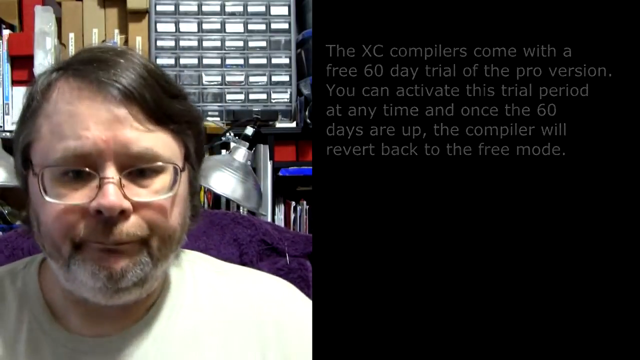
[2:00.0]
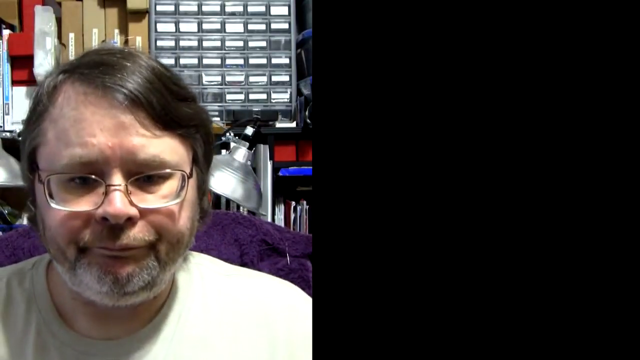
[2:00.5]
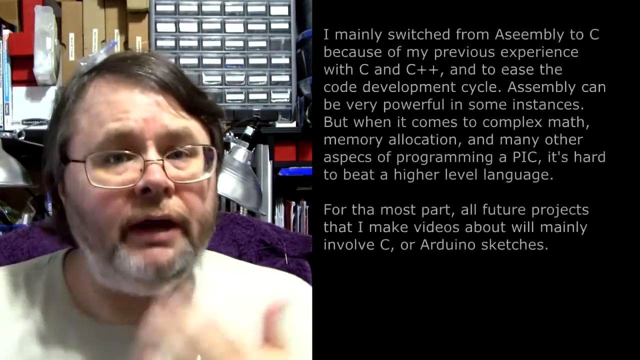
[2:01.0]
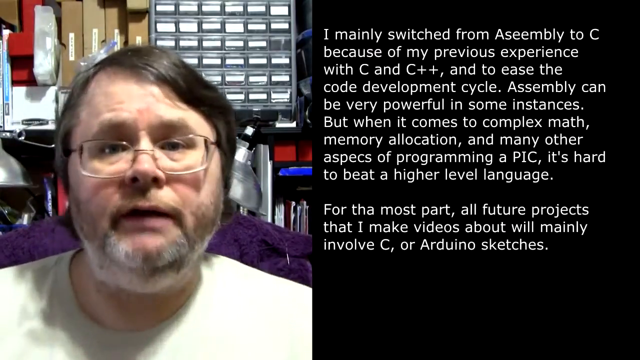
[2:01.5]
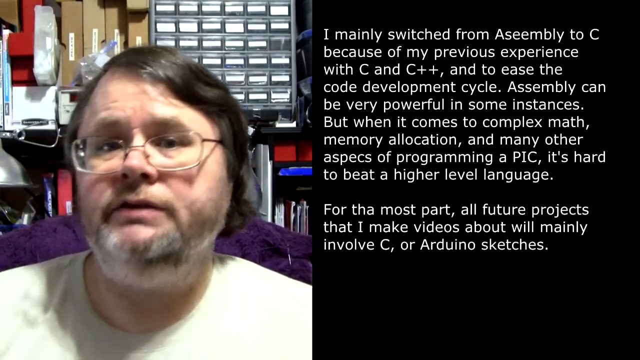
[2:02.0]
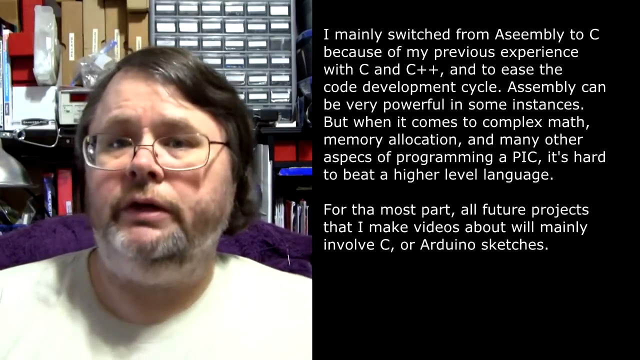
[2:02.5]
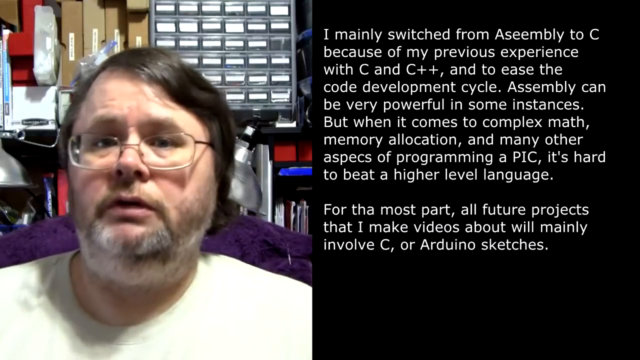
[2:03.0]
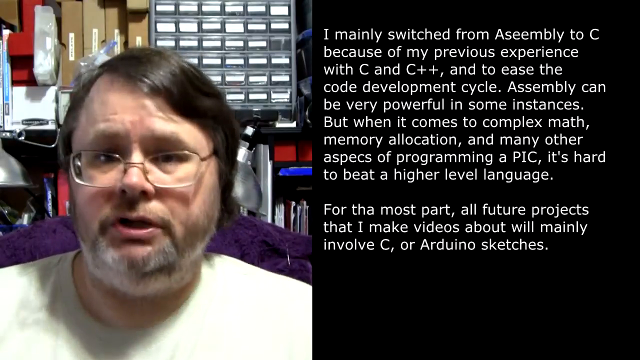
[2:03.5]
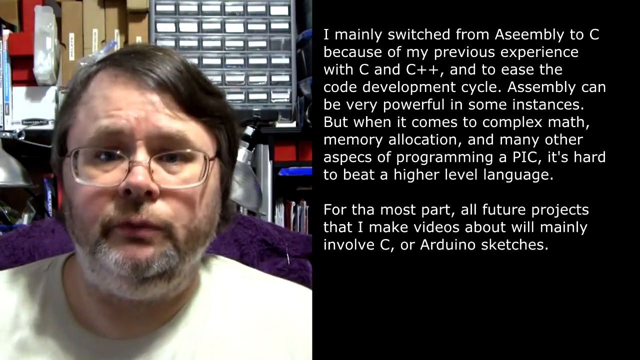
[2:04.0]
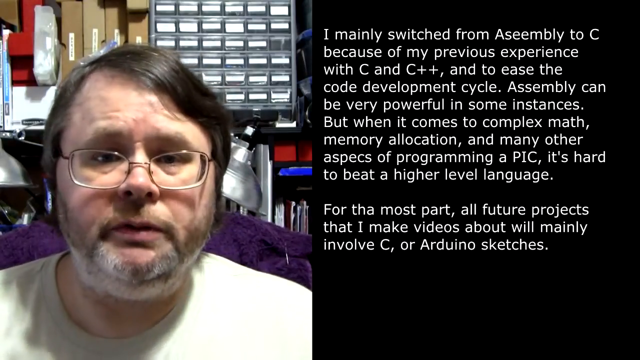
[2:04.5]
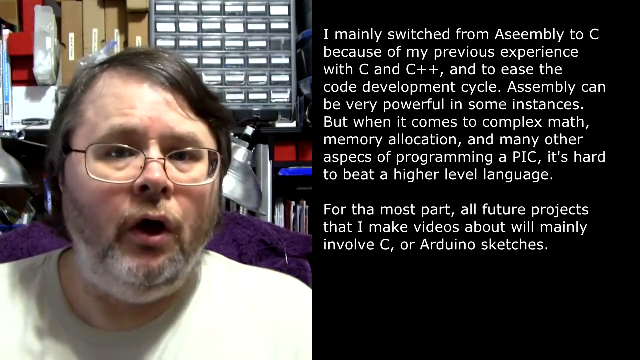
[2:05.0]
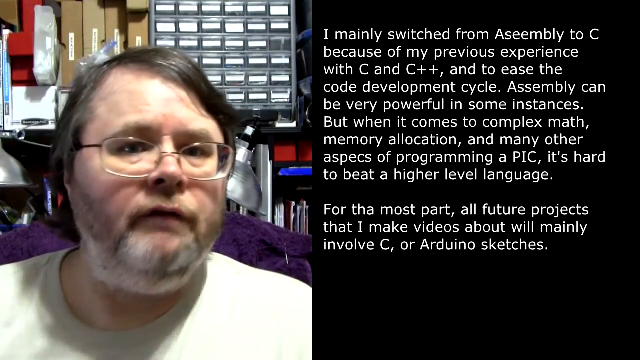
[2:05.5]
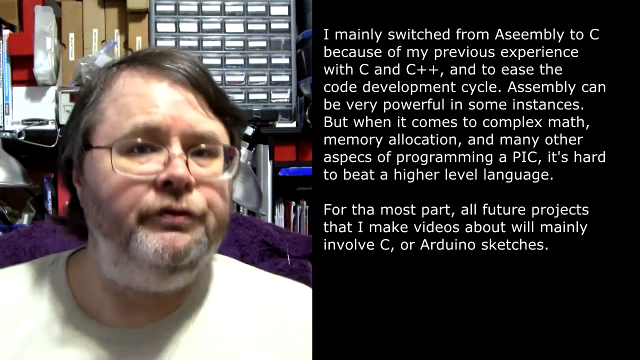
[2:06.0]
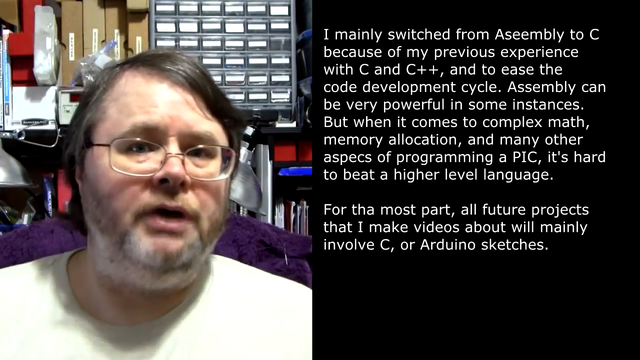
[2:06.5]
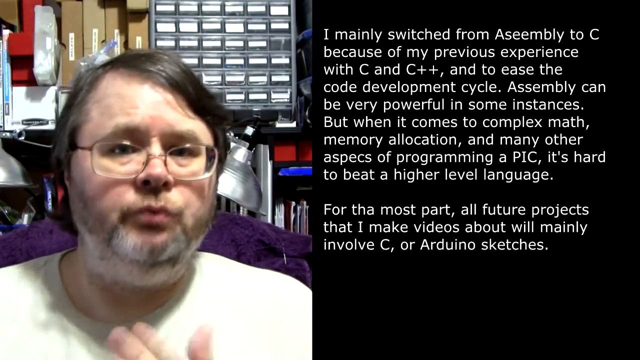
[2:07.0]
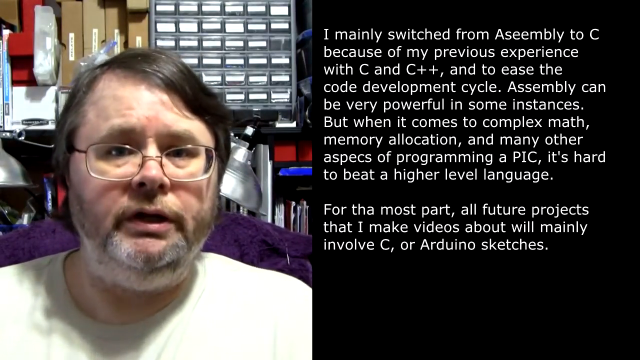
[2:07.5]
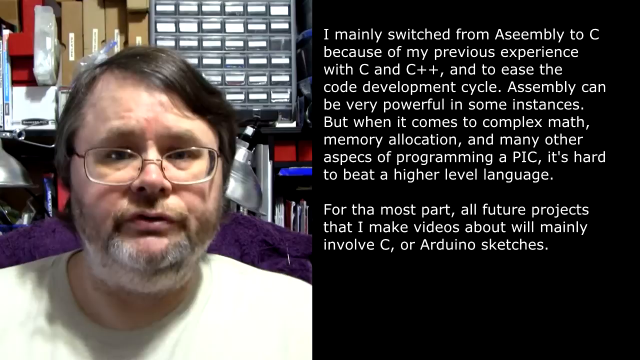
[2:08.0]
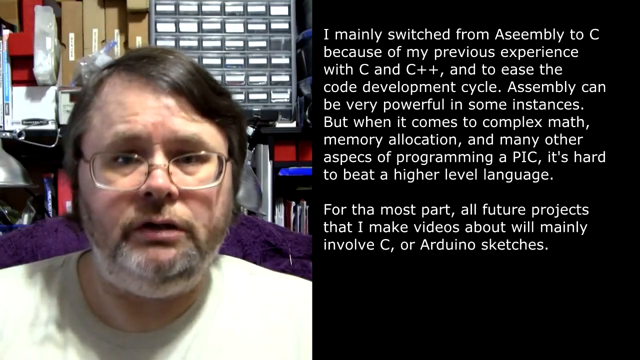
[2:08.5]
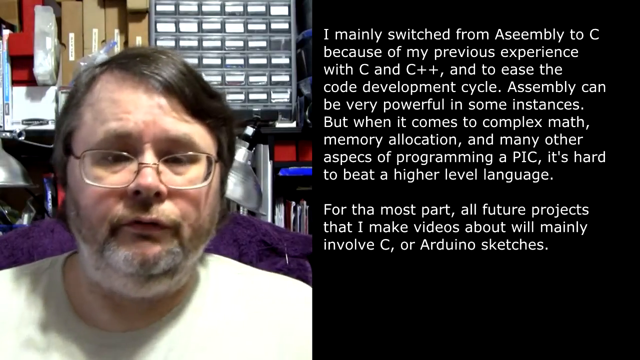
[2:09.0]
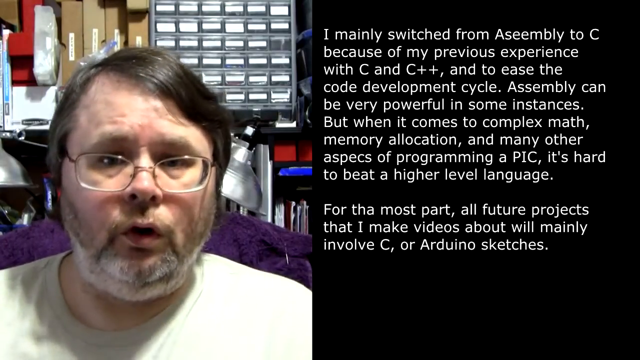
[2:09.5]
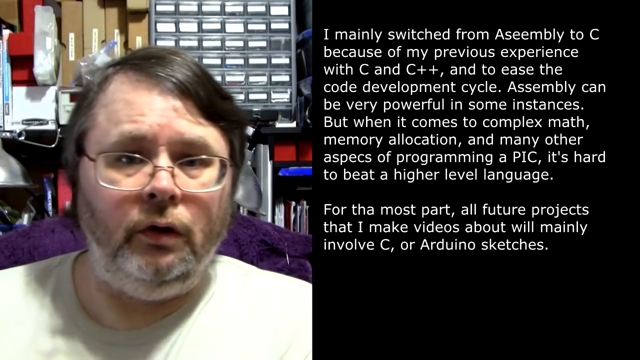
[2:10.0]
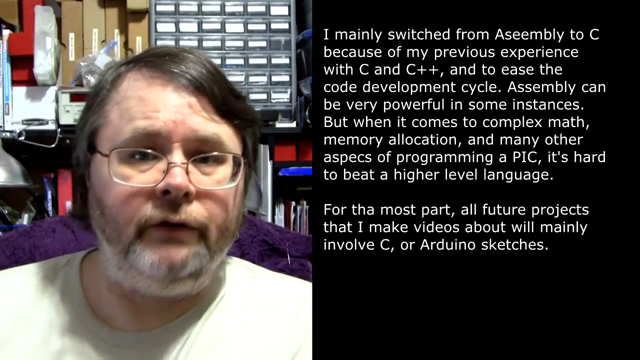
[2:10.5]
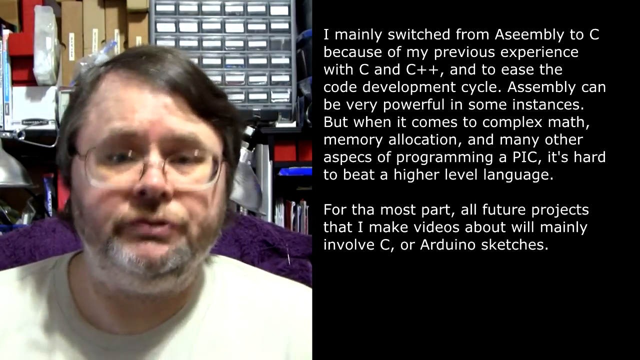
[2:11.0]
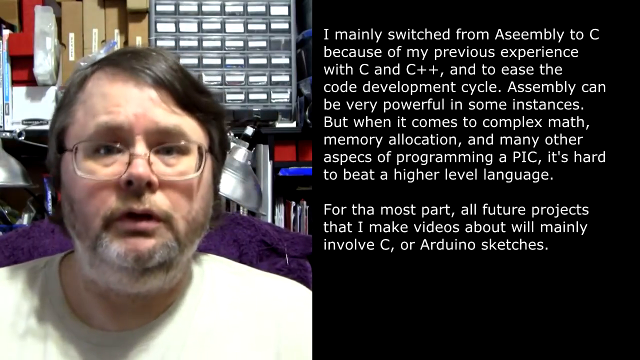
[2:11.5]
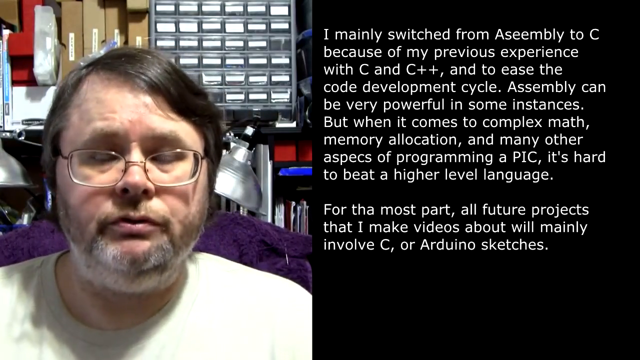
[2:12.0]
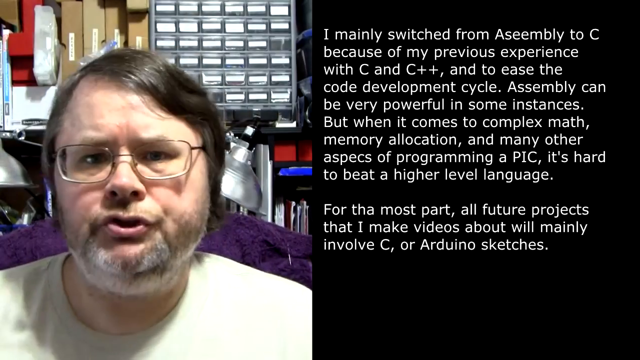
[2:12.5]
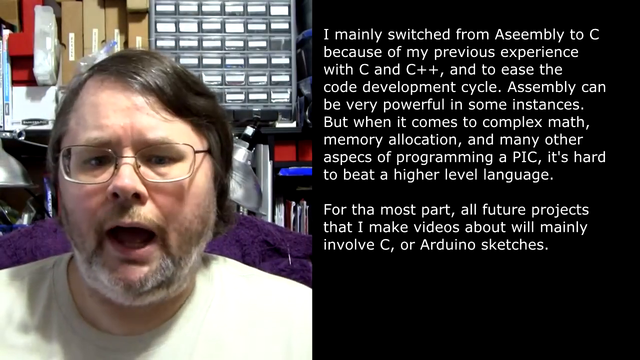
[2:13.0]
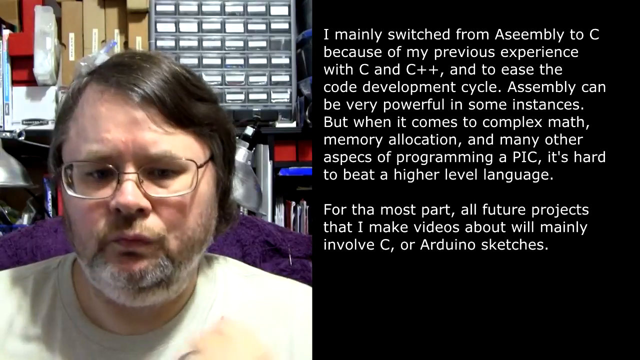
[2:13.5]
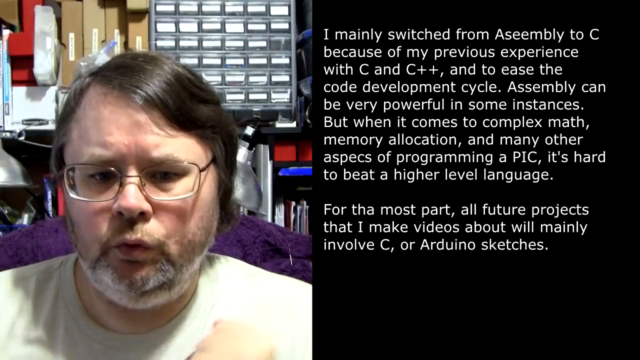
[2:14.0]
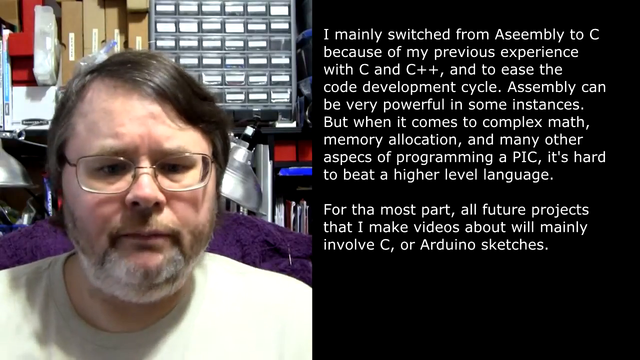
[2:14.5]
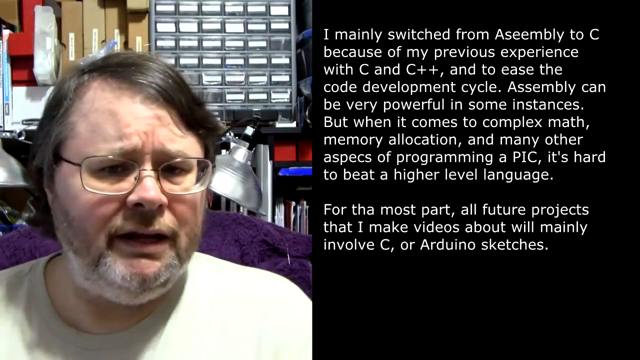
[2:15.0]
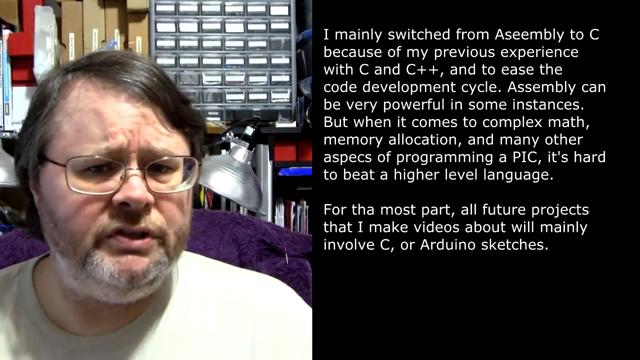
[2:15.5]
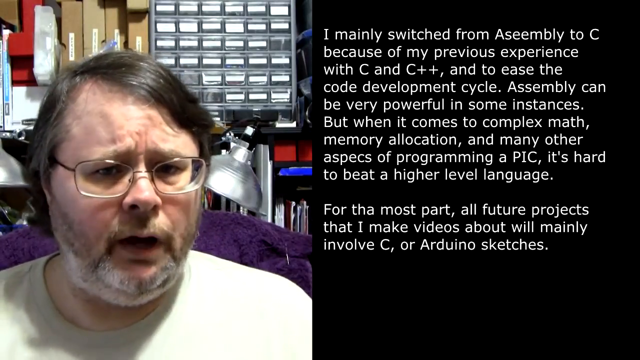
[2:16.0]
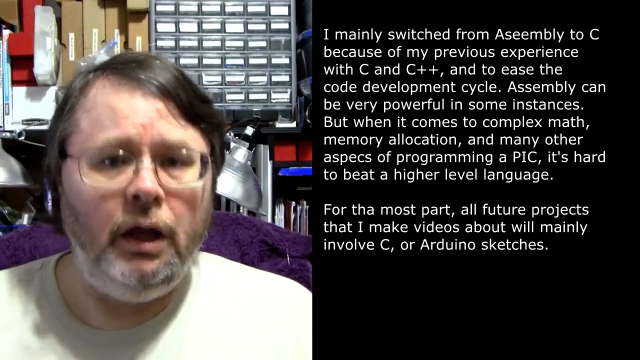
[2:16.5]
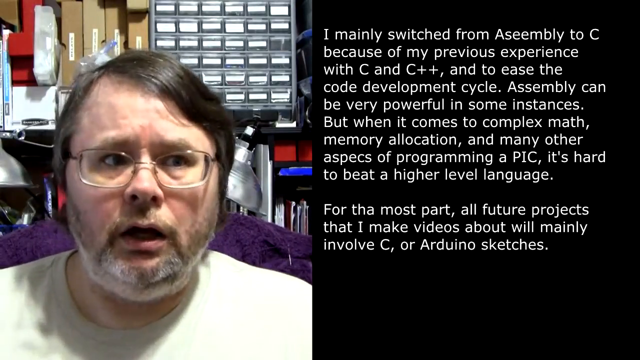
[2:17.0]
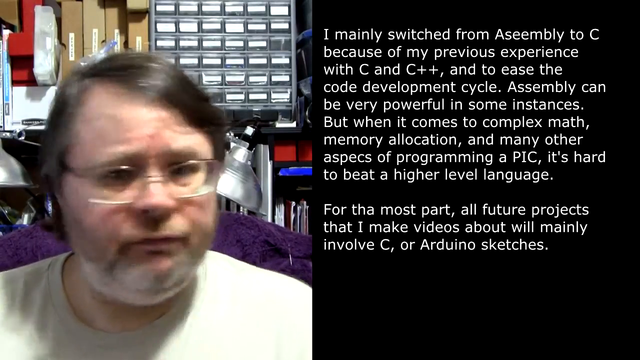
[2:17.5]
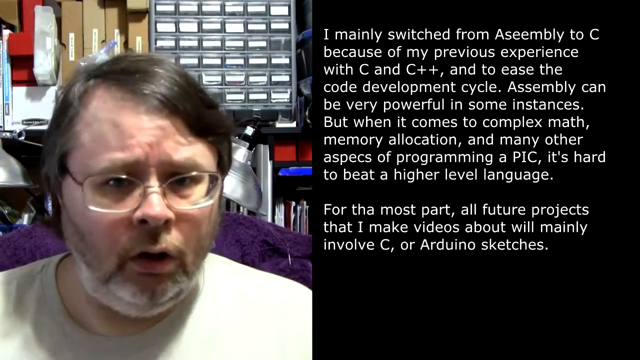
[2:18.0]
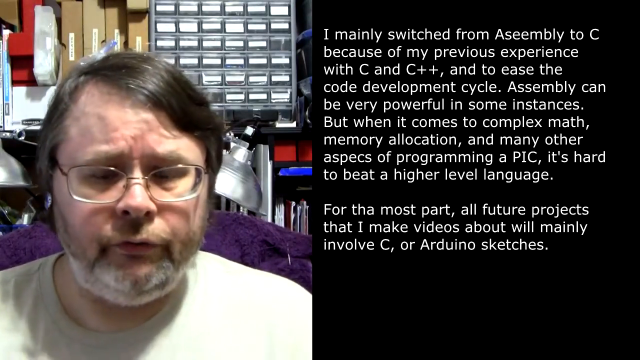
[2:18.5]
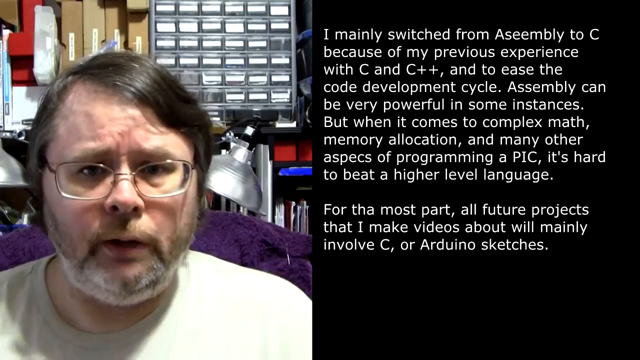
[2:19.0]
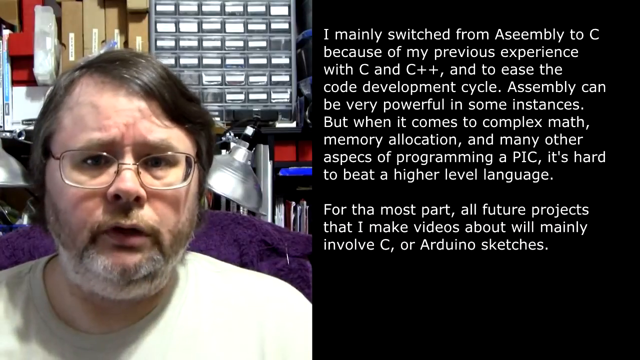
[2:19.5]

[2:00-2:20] He looks more upward at the camera, his chin more elevated as he speaks, with his head turned a bit more to the viewer's left, whereas before it was angled more to the viewer's right. The white words on the right side of the screen have changed and read: "I mainly switched from assembly to C because of my previous experience with C and C++ and to ease the code development cycle. Assembly can be very powerful in some instances, but when it comes to complex math memory allocation and many other aspects of programming, a PIC, it's hard to beat a higher level language." After a space it reads: "For the most part, all future projects that I make videos about will mainly involve C or Arduino sketches." He now uses both hands more, with basically just the tips of his hands visible, and at one point he makes a fist while furrowing his brow.